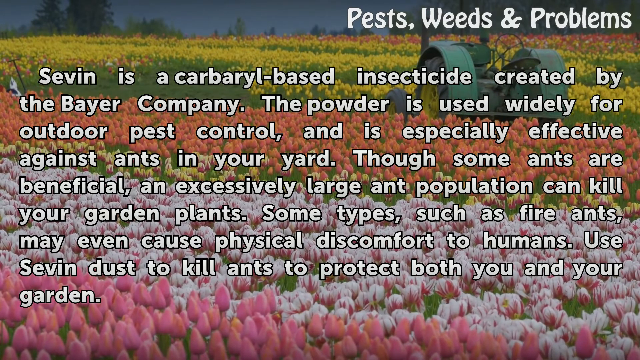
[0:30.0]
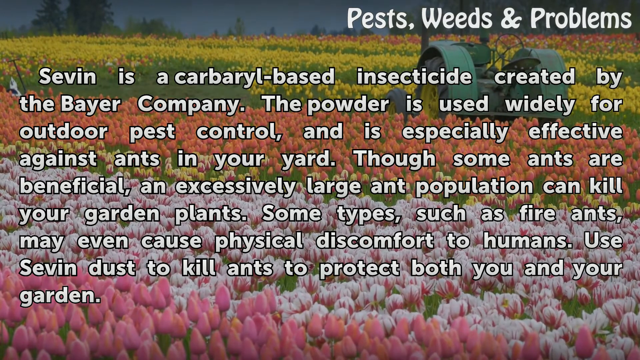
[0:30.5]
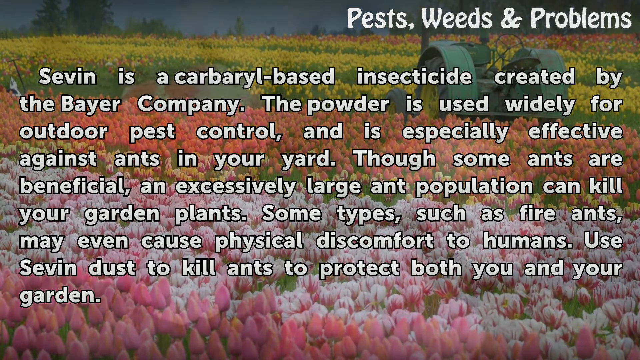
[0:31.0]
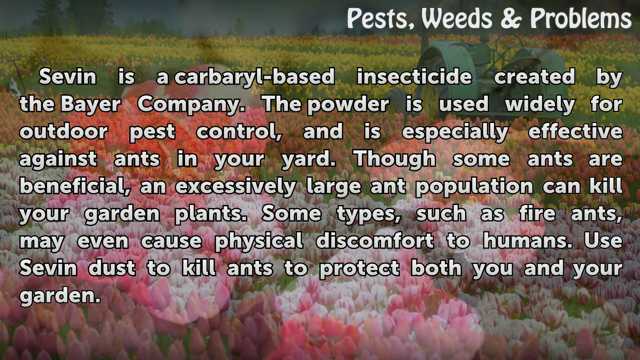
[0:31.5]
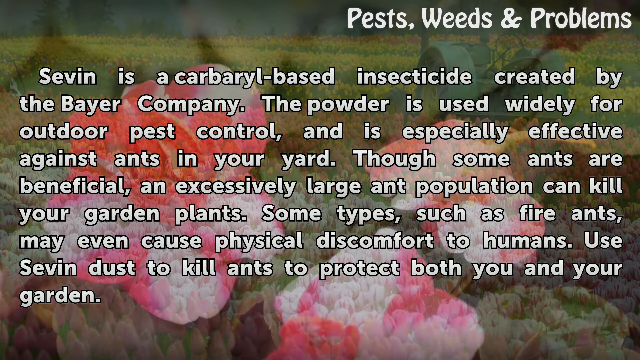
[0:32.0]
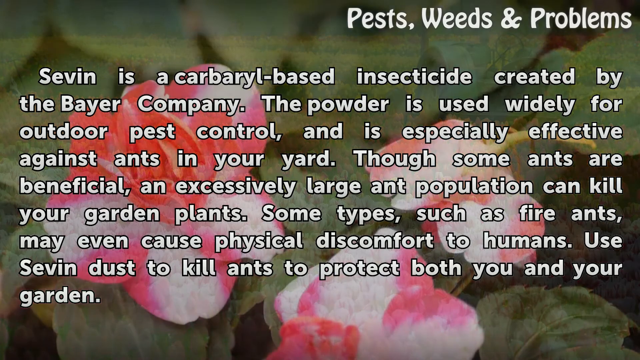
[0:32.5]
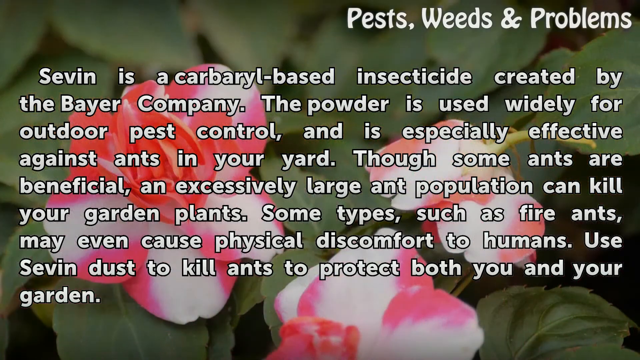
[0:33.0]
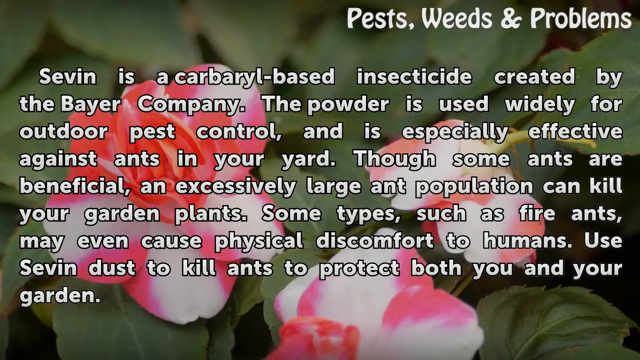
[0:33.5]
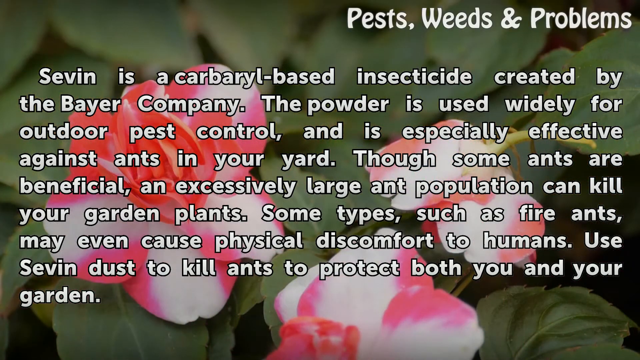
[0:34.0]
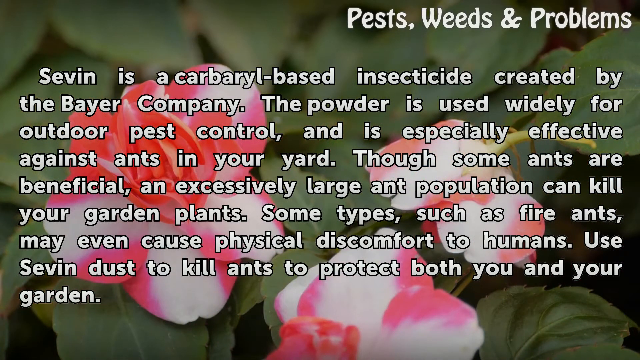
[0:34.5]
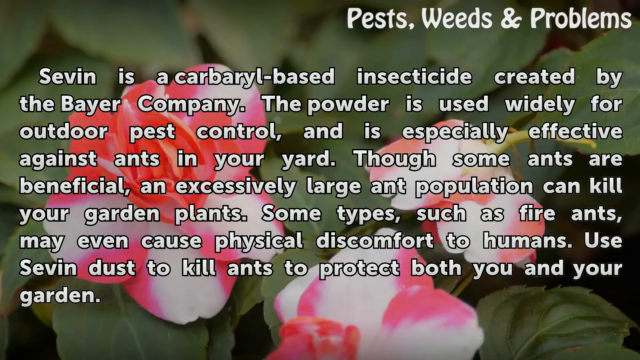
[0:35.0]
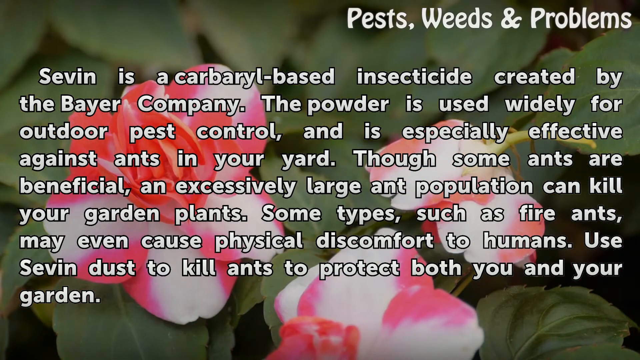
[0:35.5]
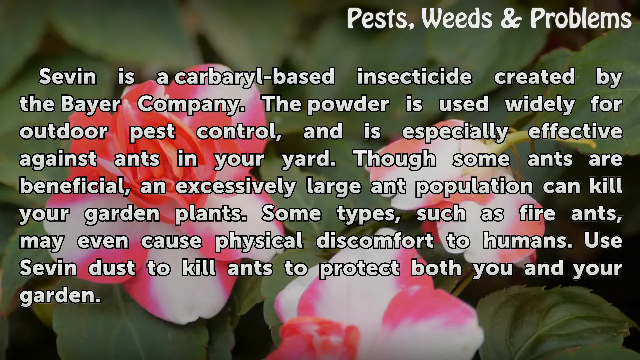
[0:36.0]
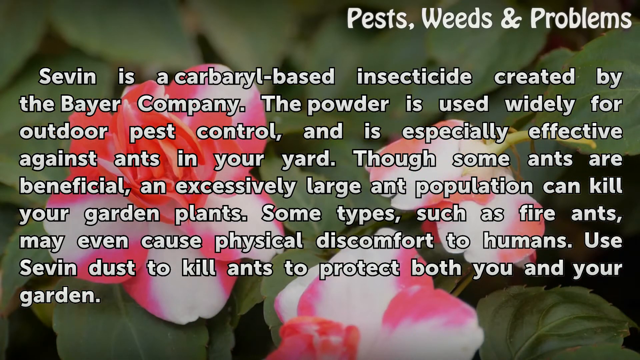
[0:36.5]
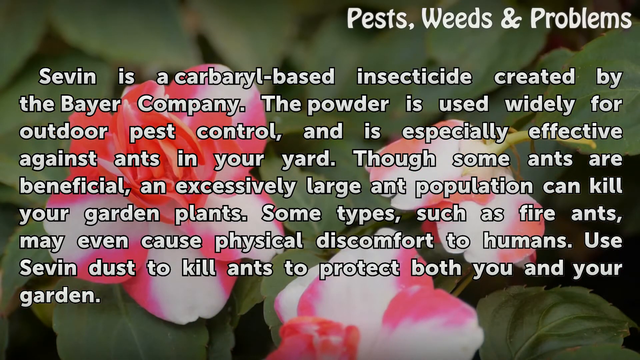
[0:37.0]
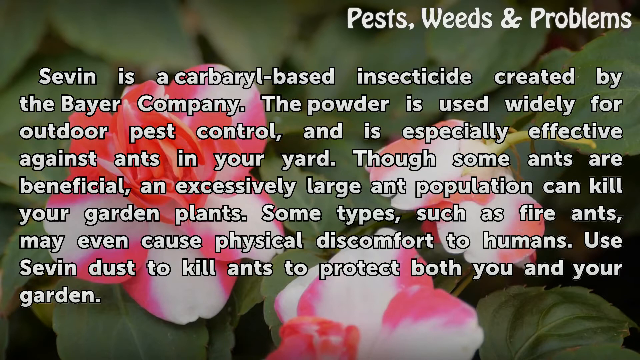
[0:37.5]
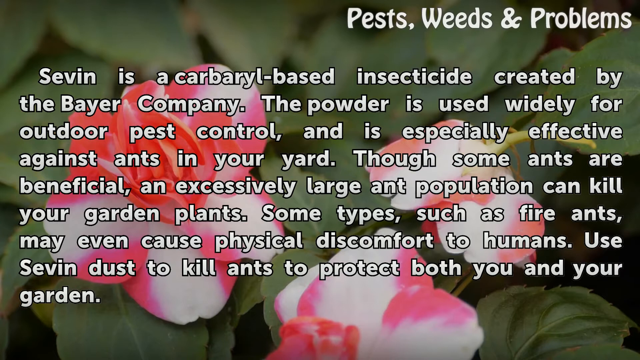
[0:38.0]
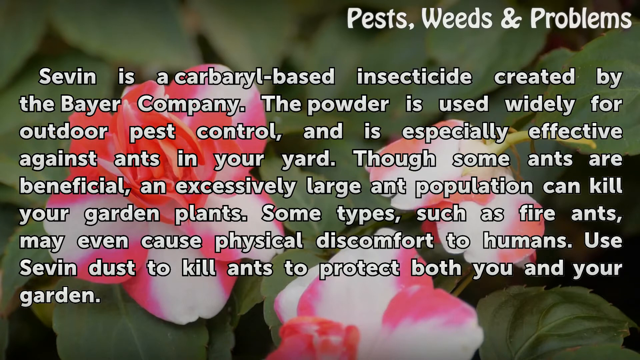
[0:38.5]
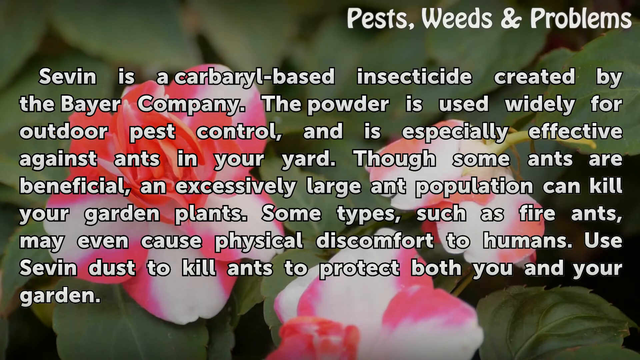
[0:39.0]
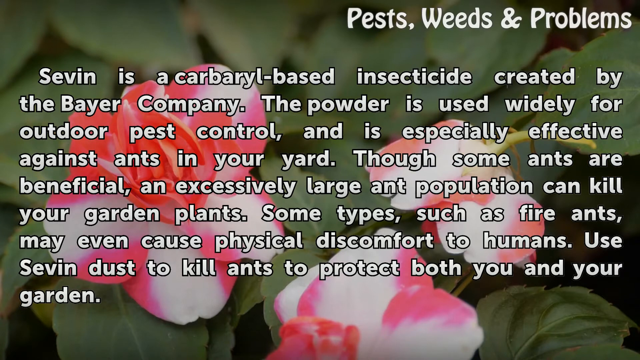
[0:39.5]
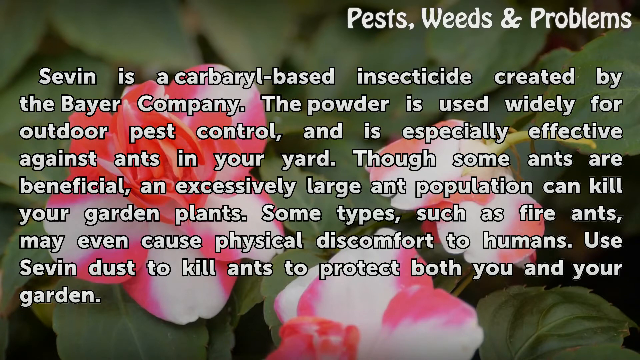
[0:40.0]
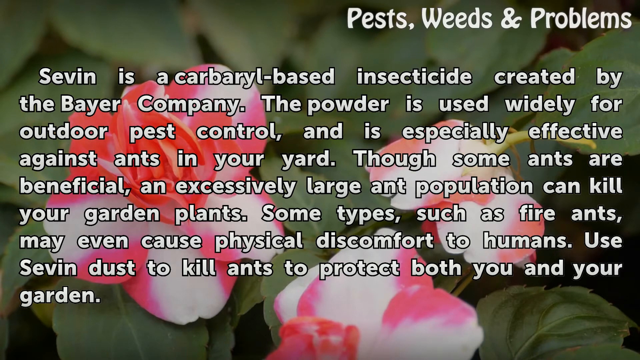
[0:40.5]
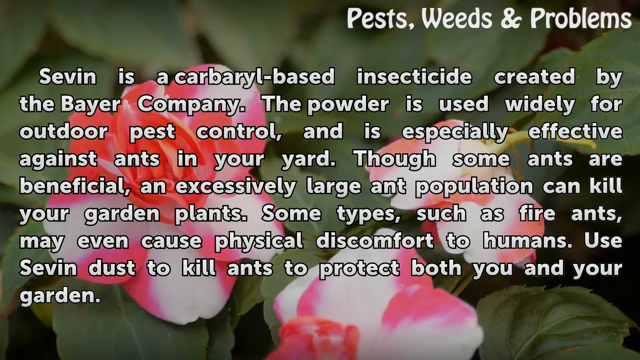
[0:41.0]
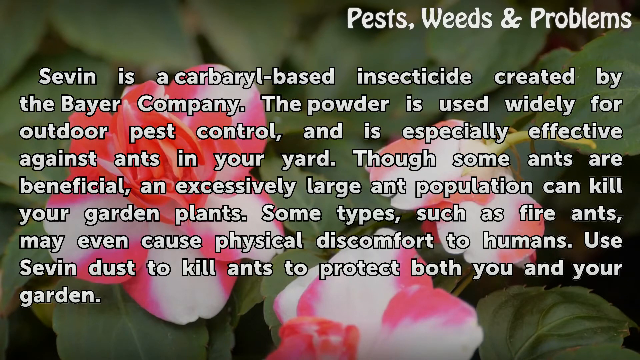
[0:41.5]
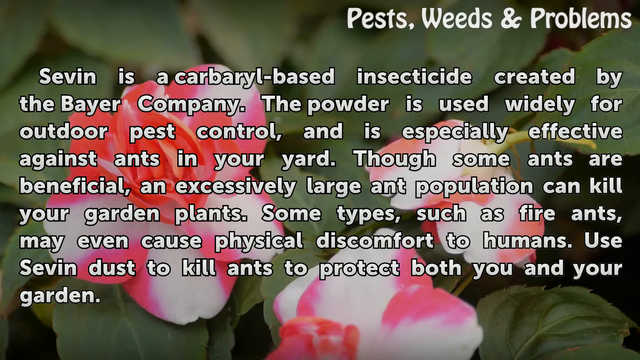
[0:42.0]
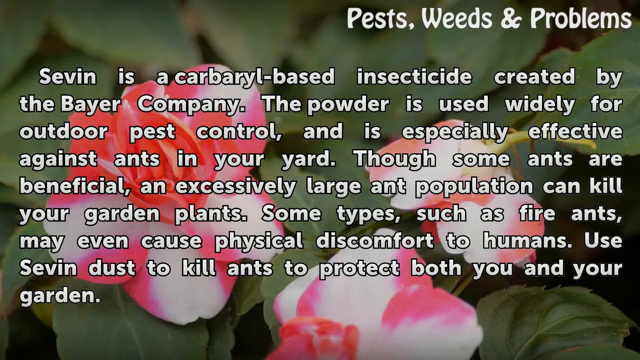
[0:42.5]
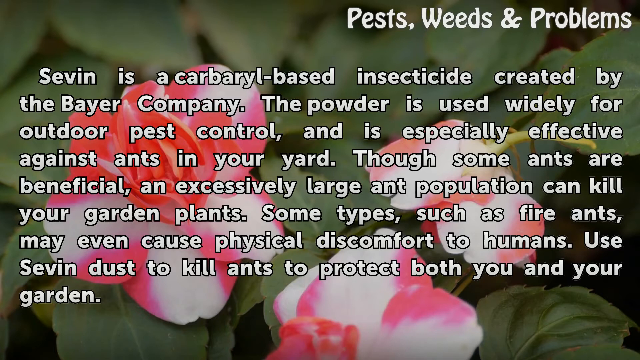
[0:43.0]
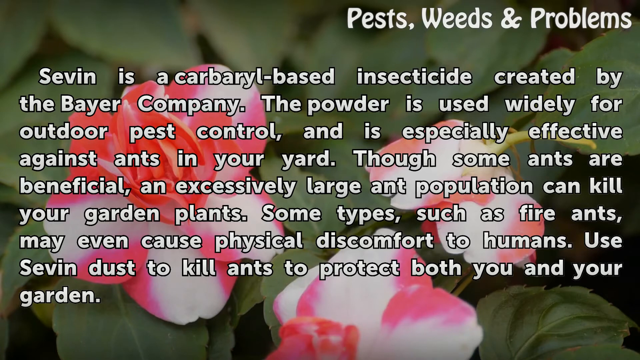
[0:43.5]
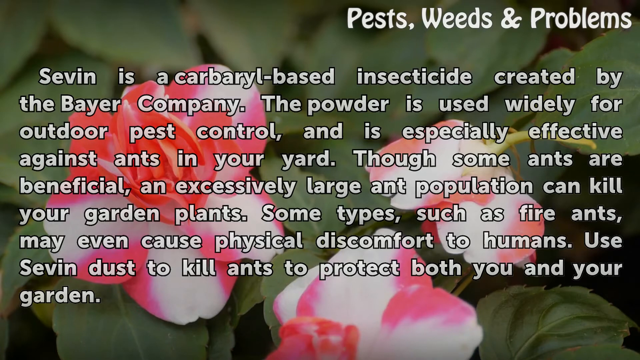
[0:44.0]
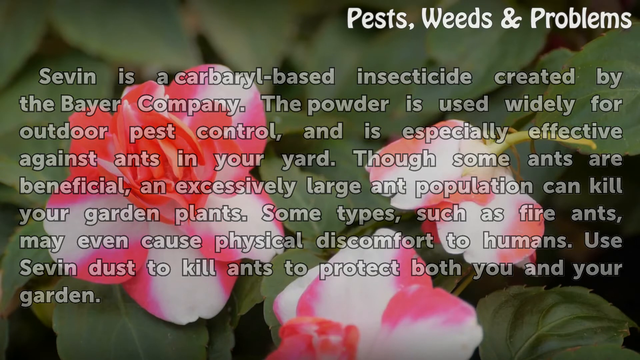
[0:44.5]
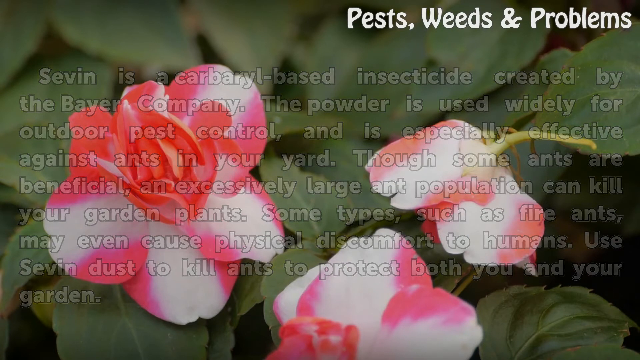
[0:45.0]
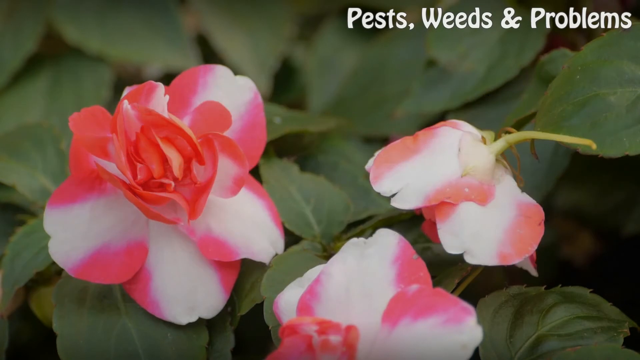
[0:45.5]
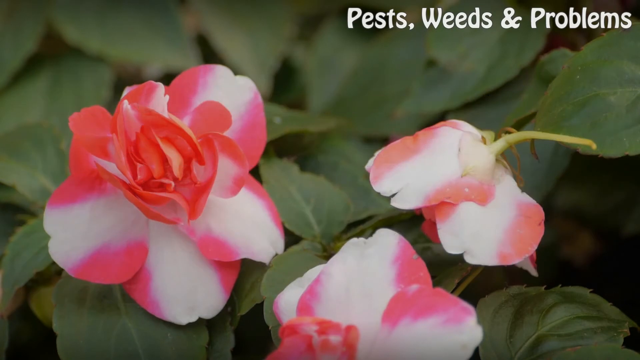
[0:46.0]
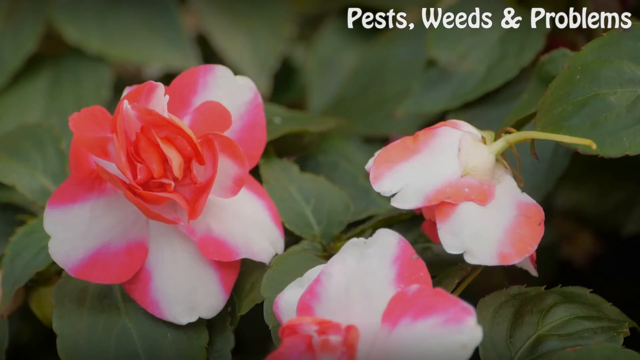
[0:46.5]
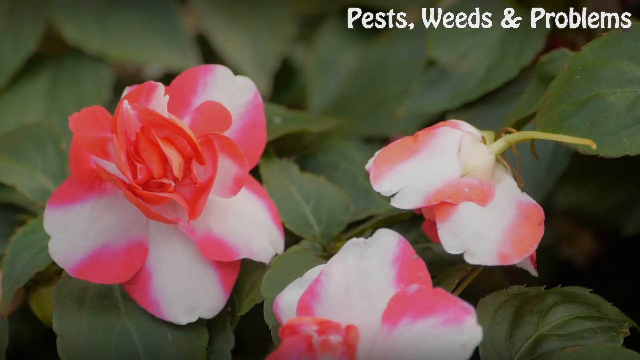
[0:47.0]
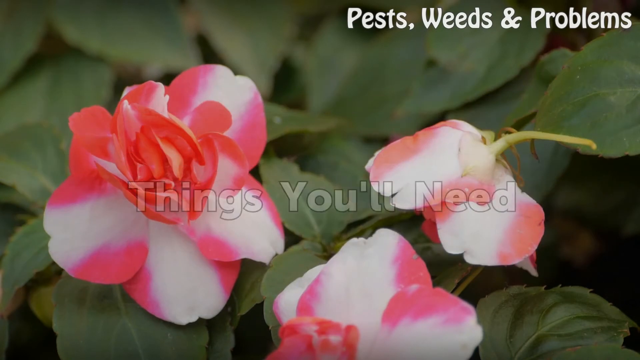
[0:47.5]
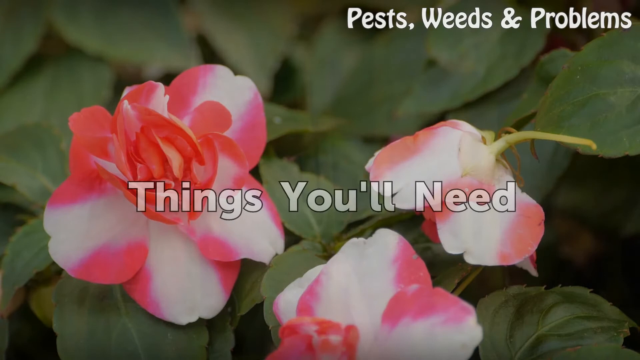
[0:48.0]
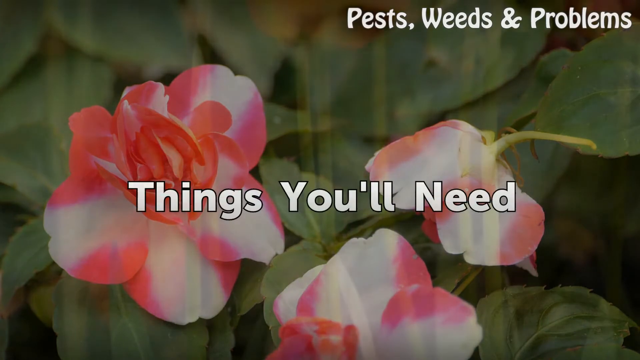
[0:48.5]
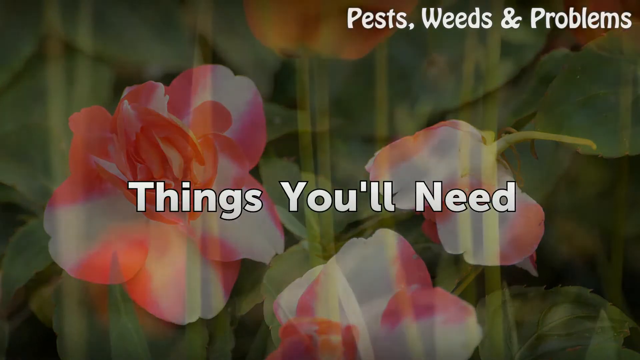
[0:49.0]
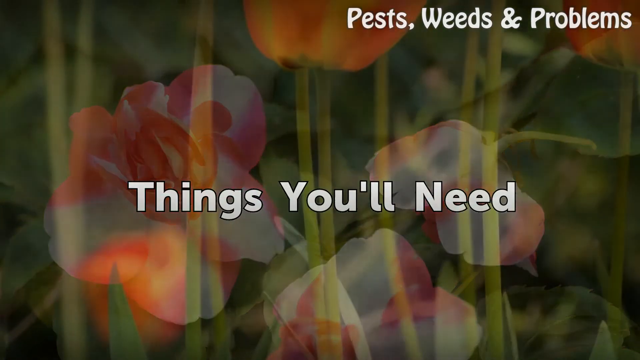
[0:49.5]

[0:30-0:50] The background changes to a zoomed-in shot of two flowers with many green leaves behind them, while the text stays the same. The text then fades out, leaving only the background image, and new text appears reading "things you'll need". A slow zooming shot pans up to the stems of about a dozen flowers; the stems are visible, but the flowers themselves only for two or three of them. The text is static over the slowly changing background.